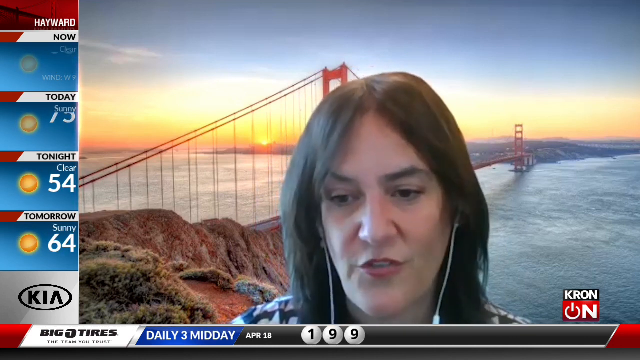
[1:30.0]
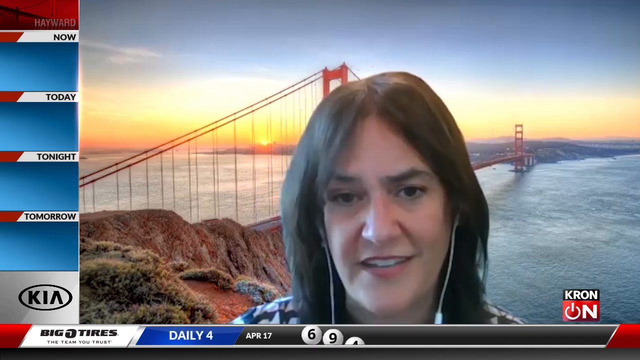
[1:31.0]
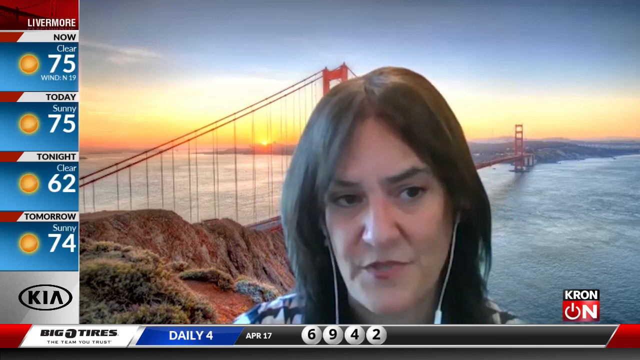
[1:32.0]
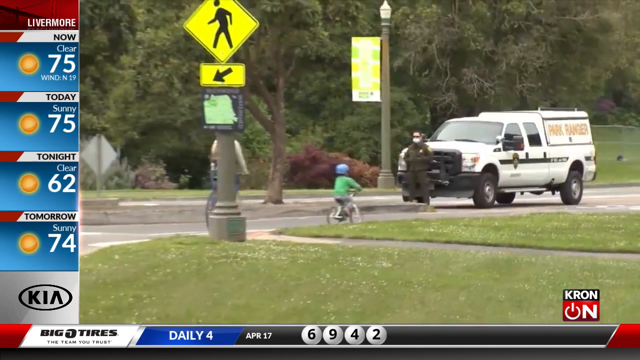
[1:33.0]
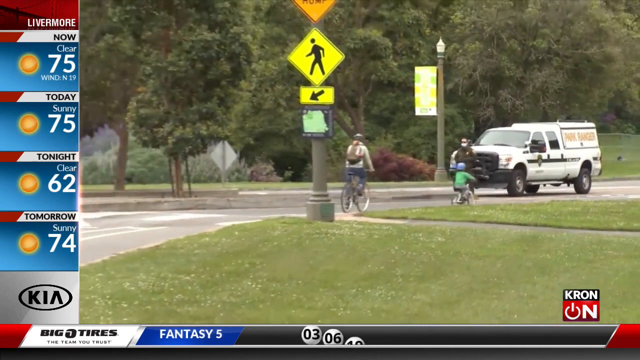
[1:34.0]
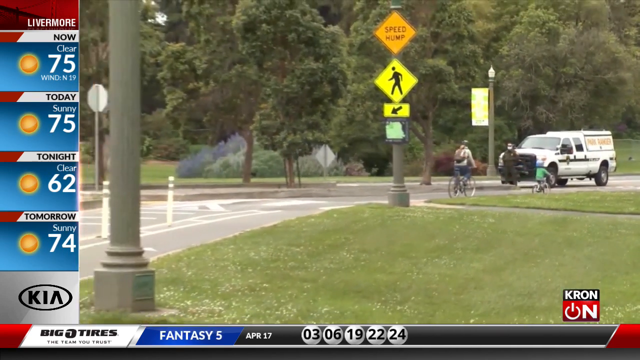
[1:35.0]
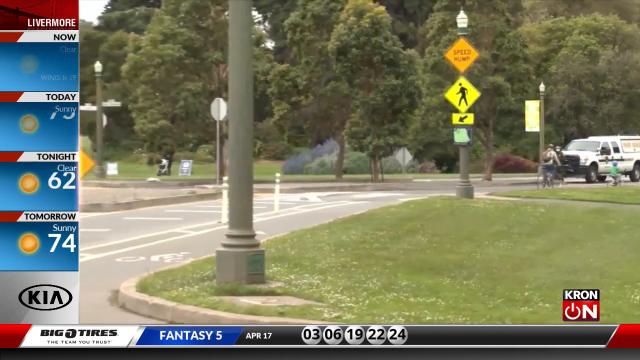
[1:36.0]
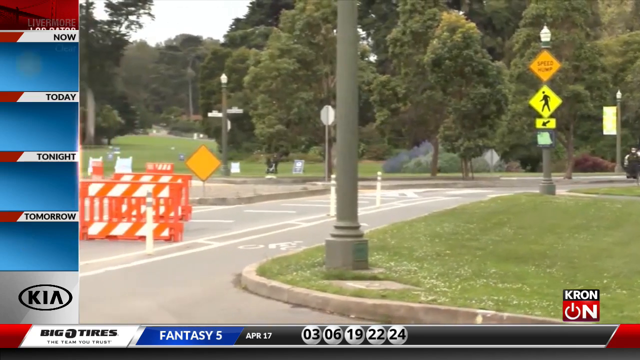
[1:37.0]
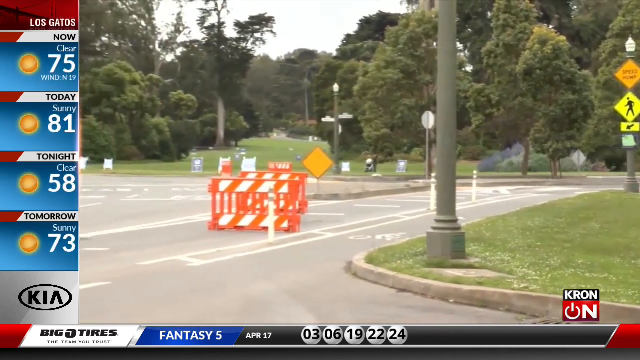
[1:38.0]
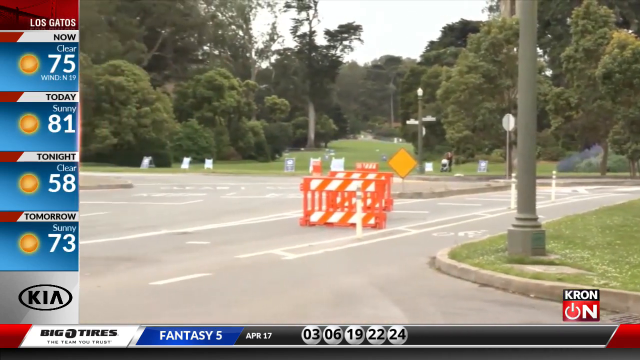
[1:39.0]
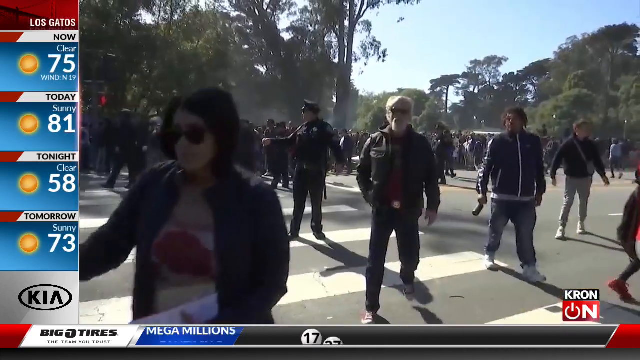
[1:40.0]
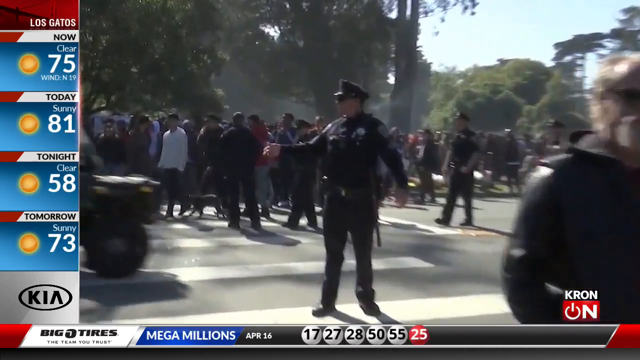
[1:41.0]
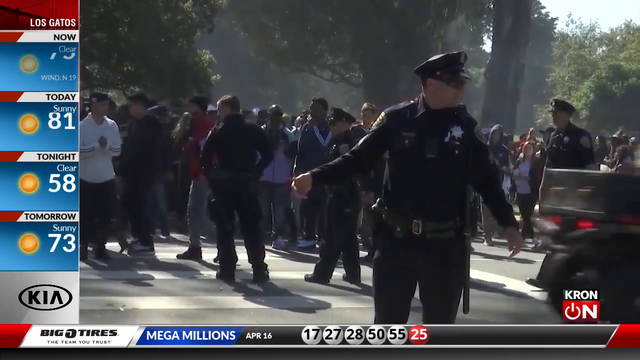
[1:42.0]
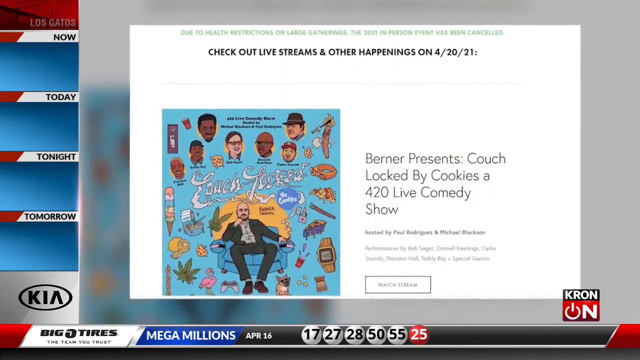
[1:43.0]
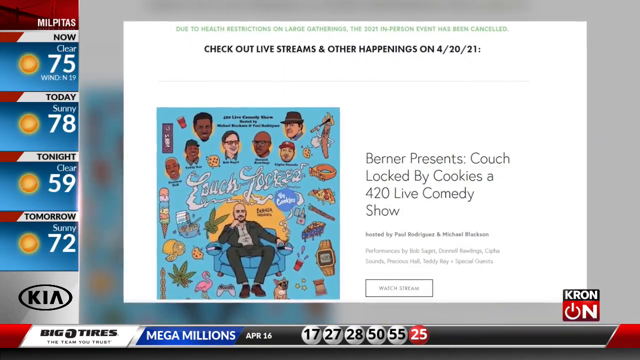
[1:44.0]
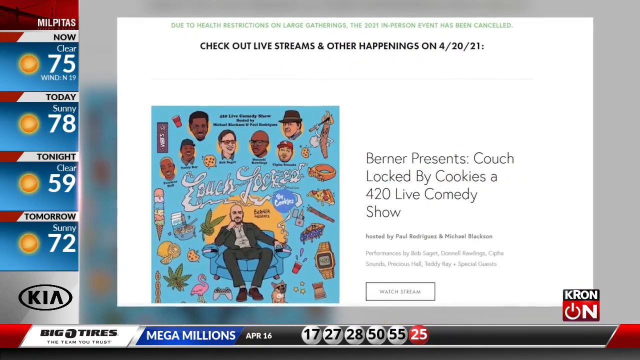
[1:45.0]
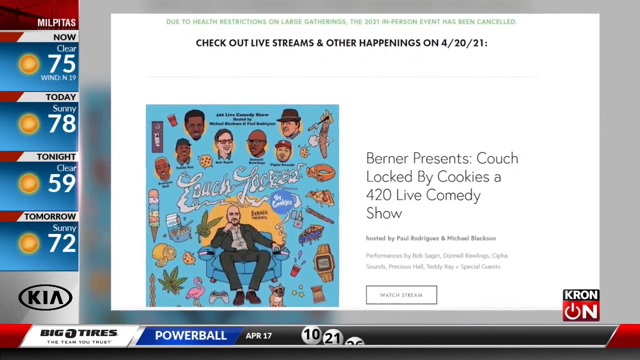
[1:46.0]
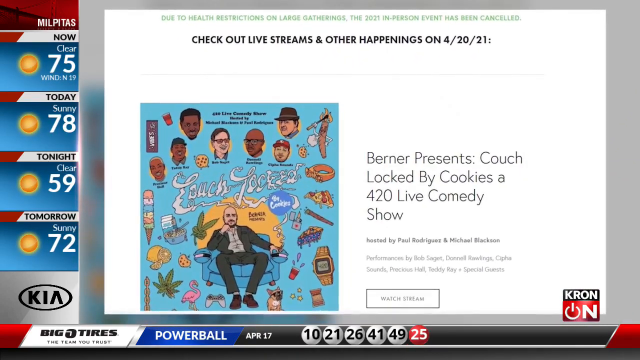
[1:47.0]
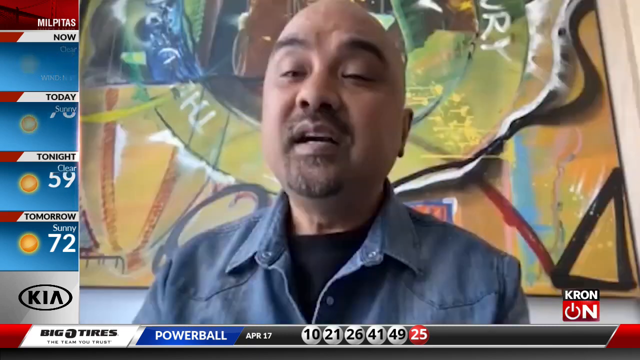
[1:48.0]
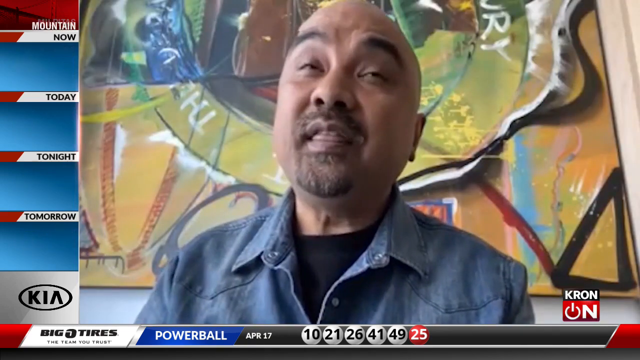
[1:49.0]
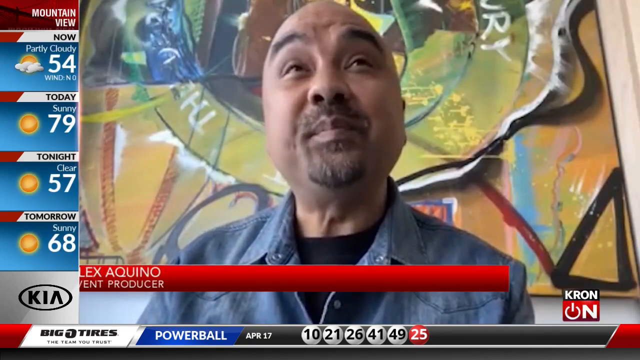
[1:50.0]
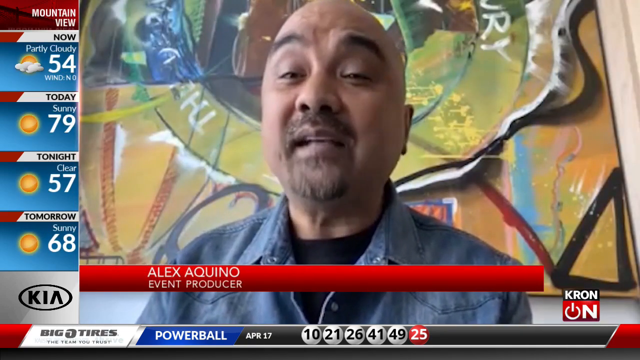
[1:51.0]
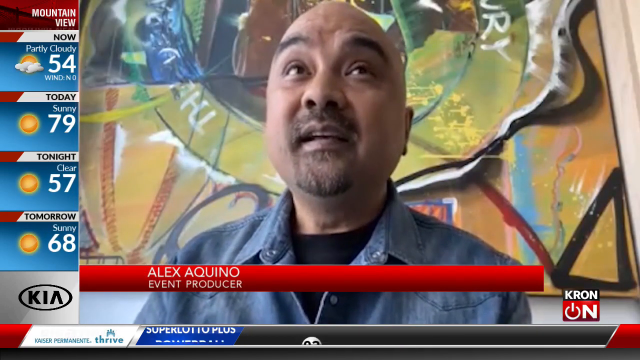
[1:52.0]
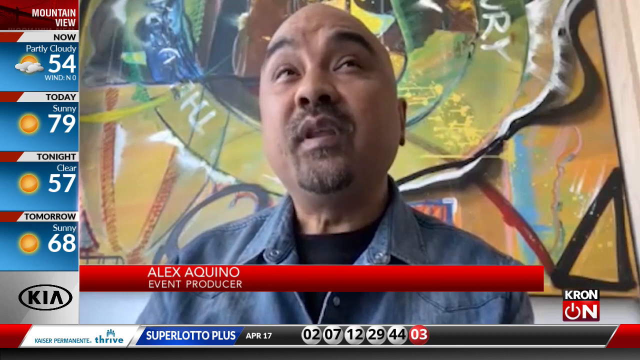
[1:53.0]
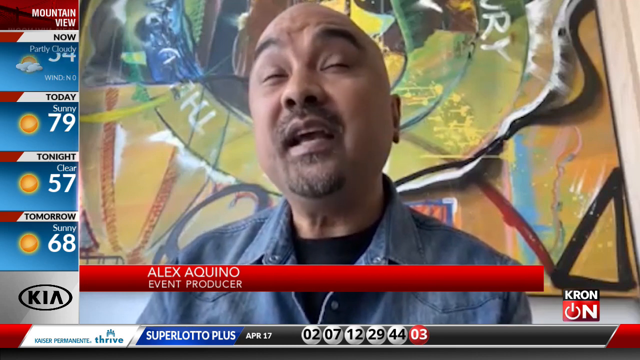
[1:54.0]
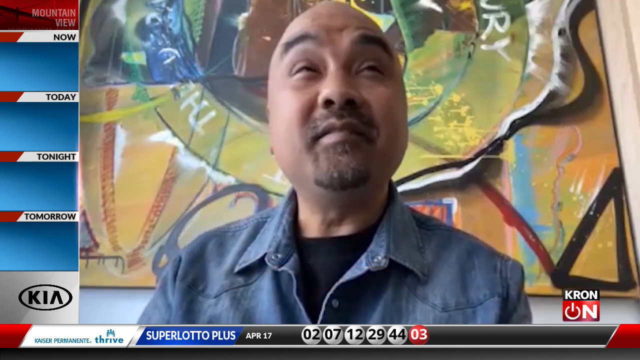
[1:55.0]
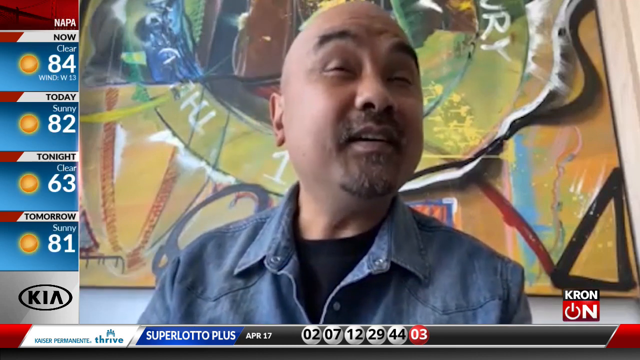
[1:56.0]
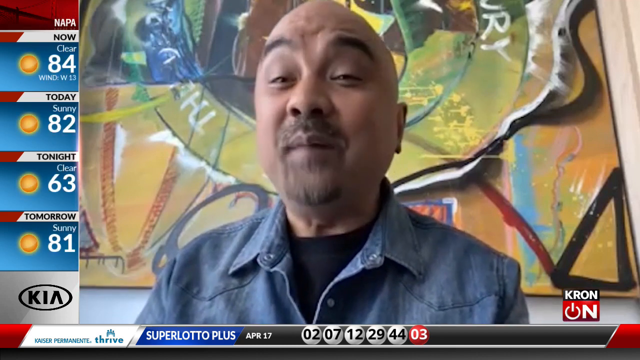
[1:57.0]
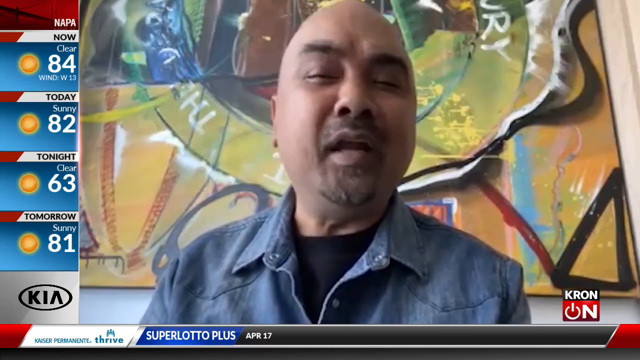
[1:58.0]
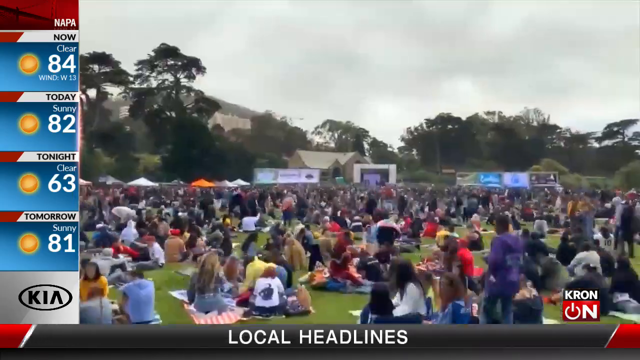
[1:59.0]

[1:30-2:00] A bridge is shown. A child and a man appear to be sailing a boat across the water. The crowd is still there, pulling and pushing, while a police officer in uniform tries to maintain order. On the side of the screen, the names of different towns are shown.